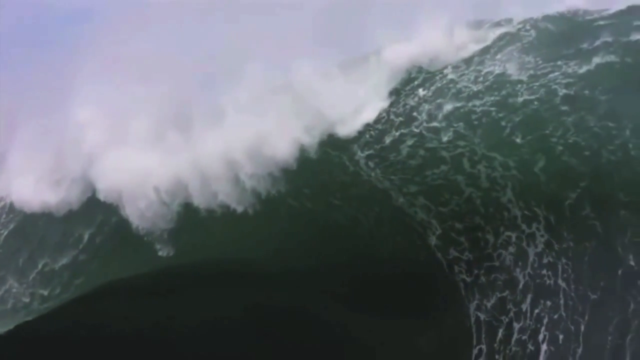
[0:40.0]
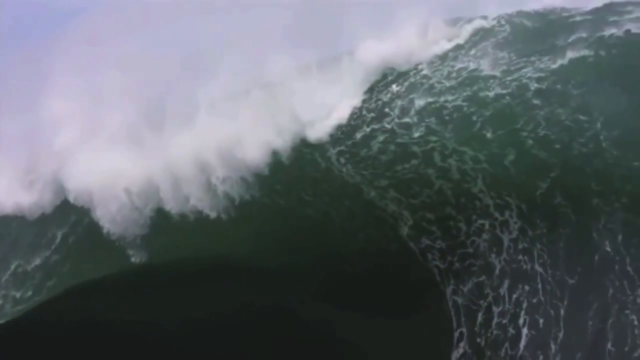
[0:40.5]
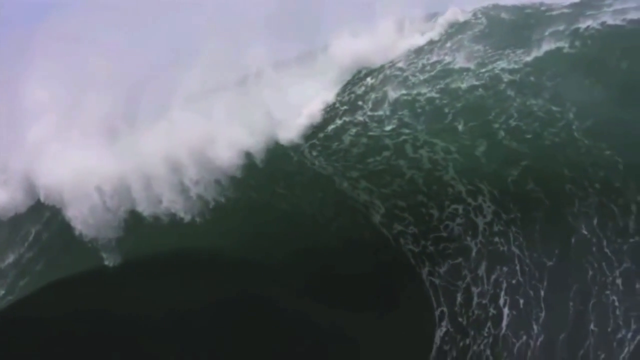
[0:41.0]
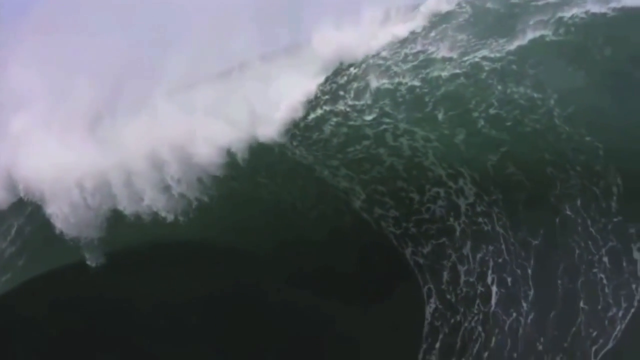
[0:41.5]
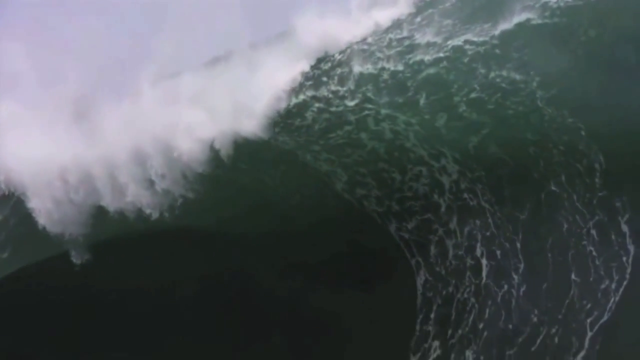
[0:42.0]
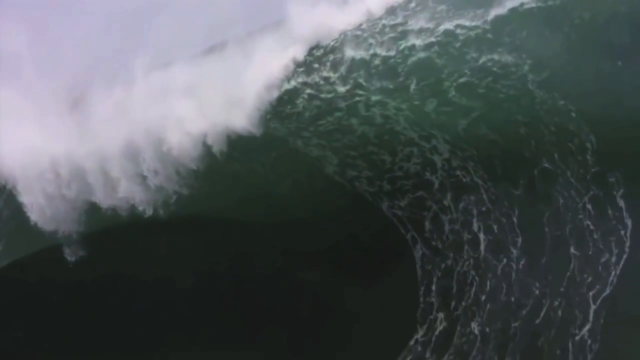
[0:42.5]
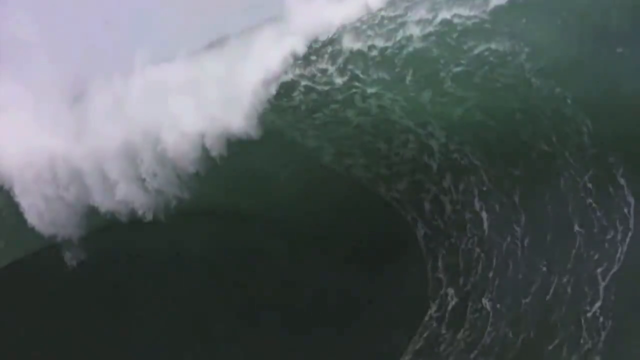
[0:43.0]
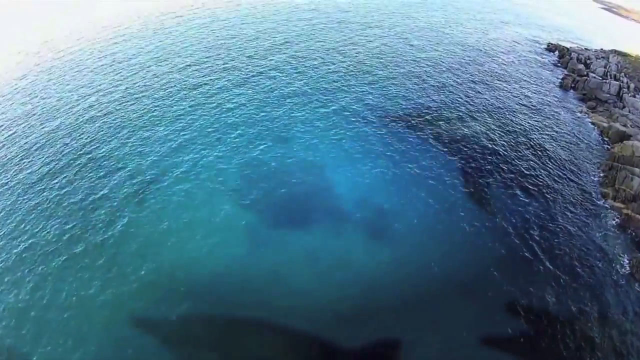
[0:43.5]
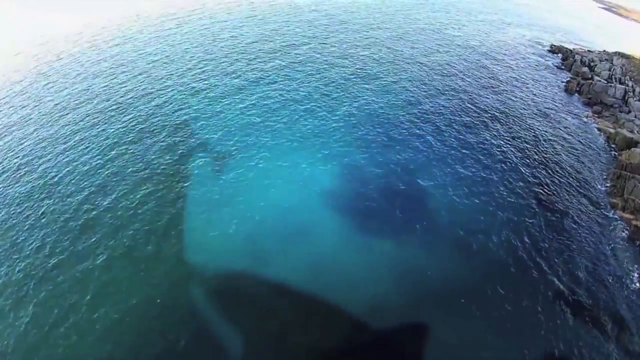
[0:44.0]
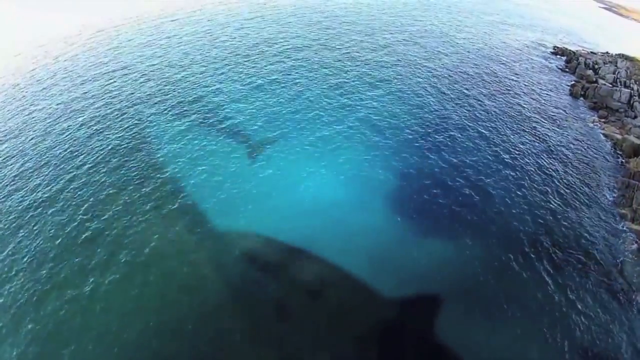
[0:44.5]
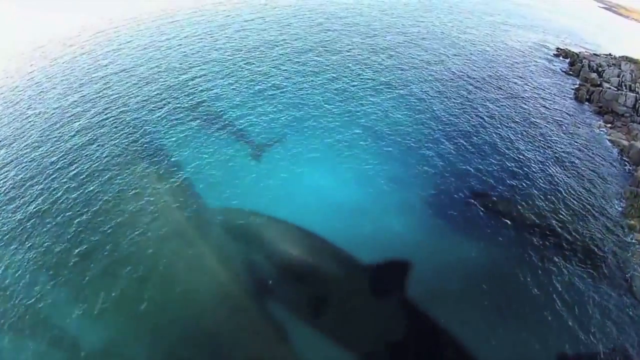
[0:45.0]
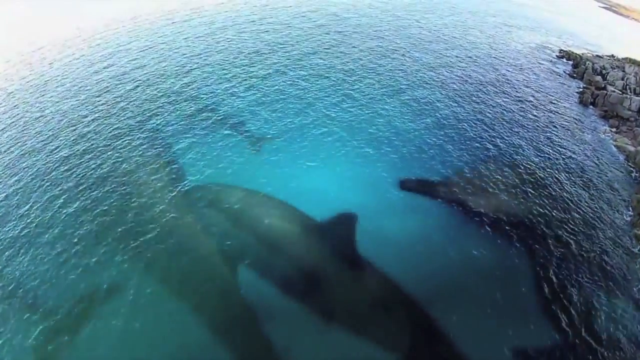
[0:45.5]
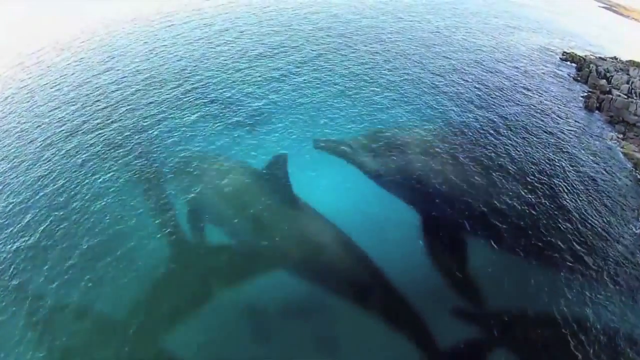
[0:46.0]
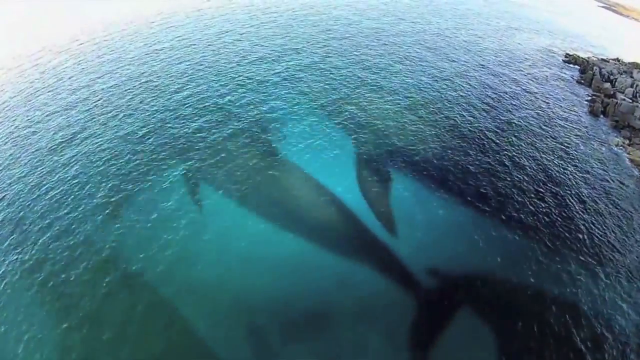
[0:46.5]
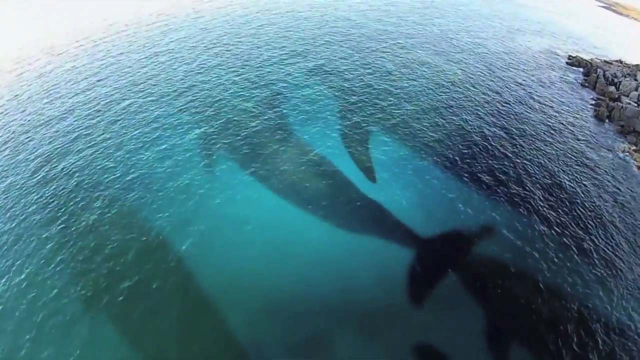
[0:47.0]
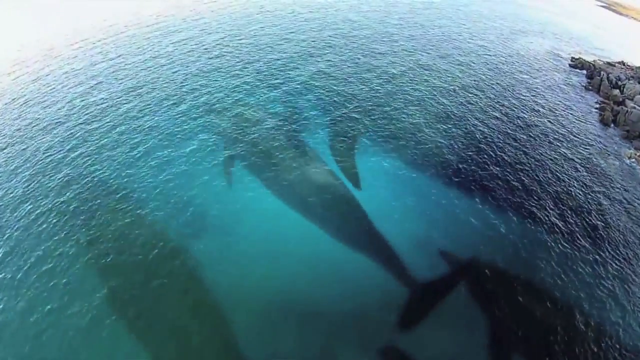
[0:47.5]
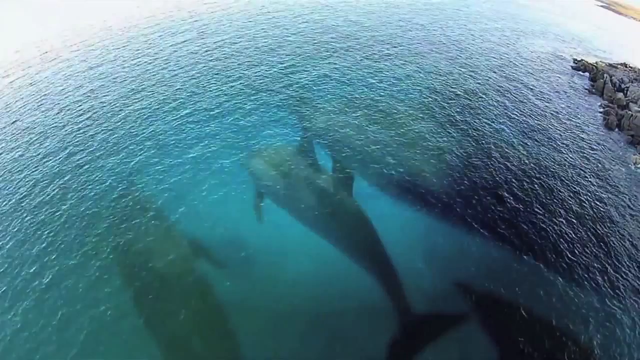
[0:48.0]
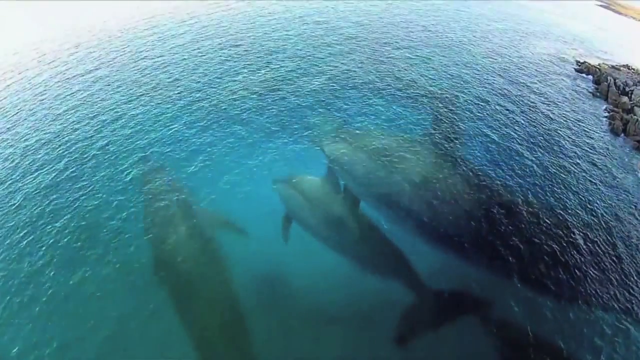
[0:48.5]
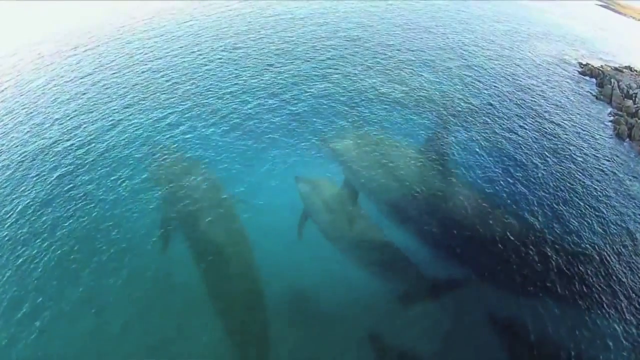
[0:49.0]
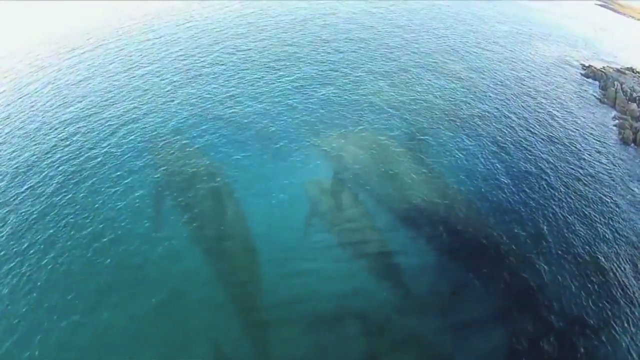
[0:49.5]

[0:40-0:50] The very young boy in the red swimsuit keeps swimming in the pool. Then a huge tide of waves comes down towards the sea. Another body of water follows, this one an animation or effect, showing dolphins very up close swimming under the water; dolphins of different sizes continue to appear underwater.